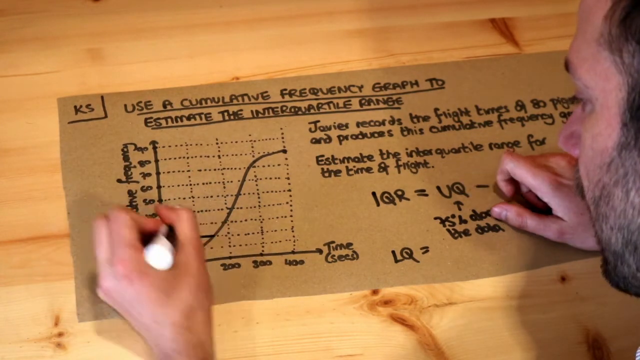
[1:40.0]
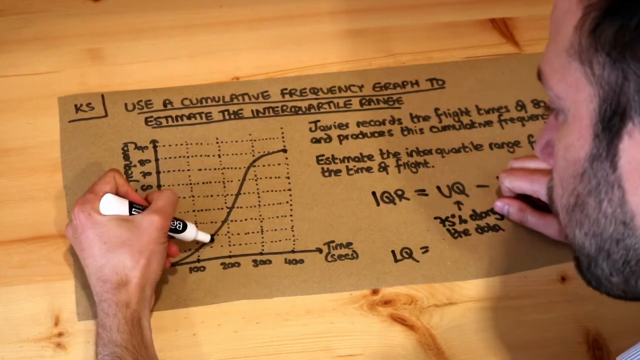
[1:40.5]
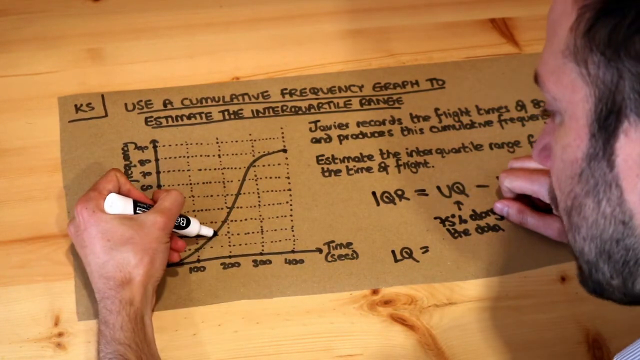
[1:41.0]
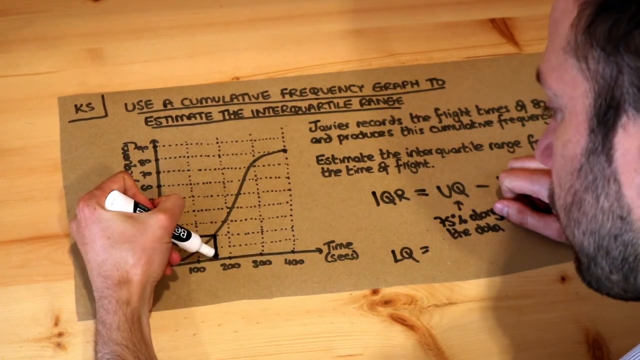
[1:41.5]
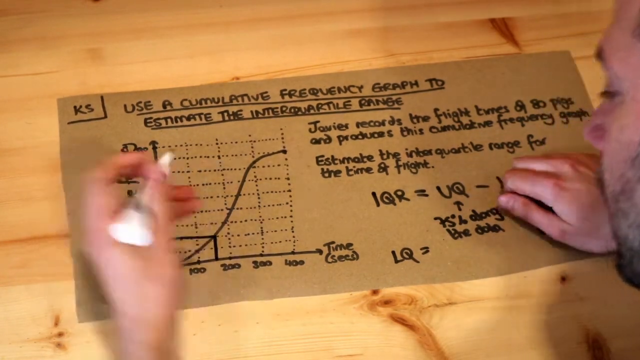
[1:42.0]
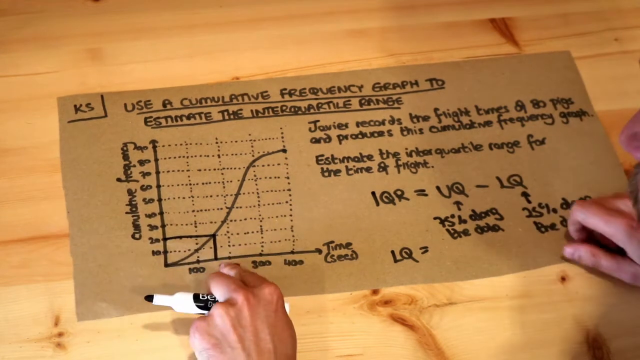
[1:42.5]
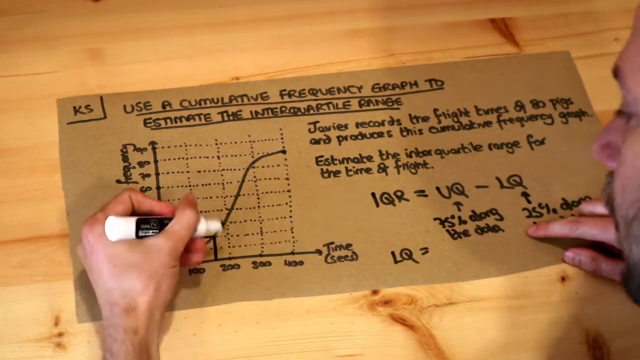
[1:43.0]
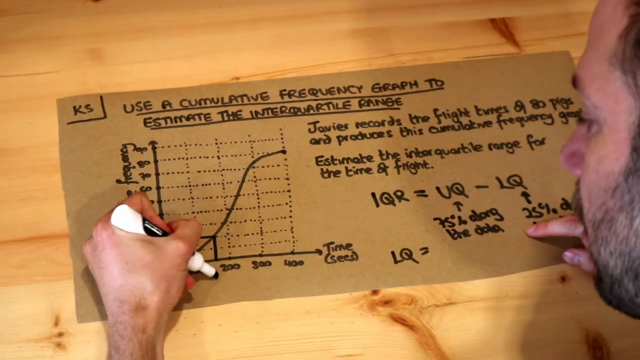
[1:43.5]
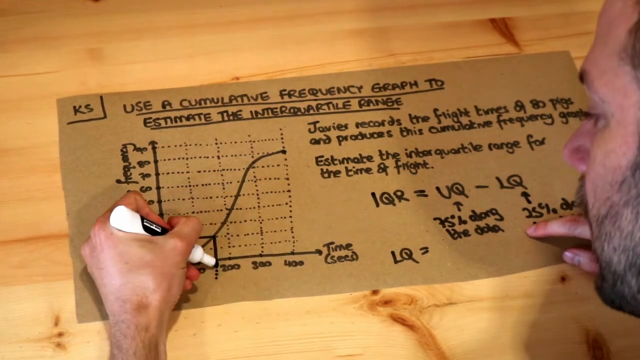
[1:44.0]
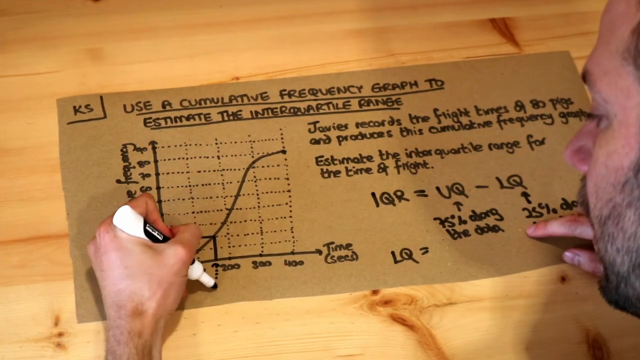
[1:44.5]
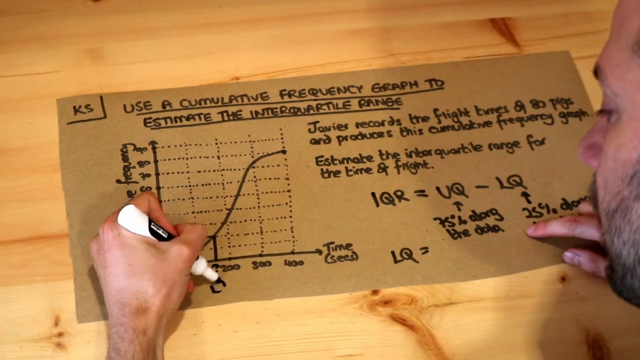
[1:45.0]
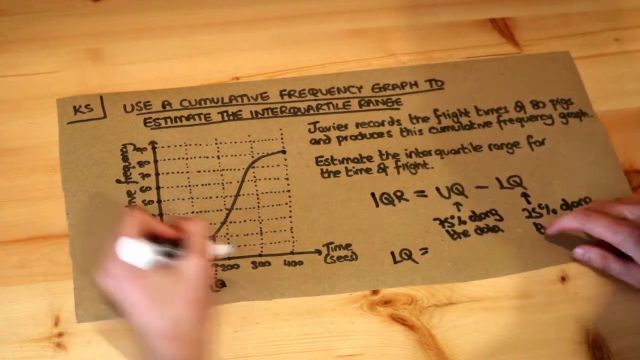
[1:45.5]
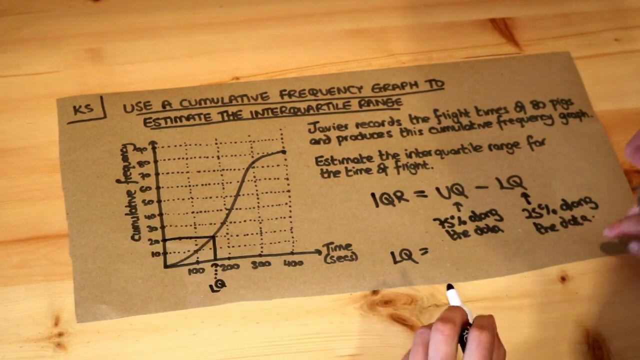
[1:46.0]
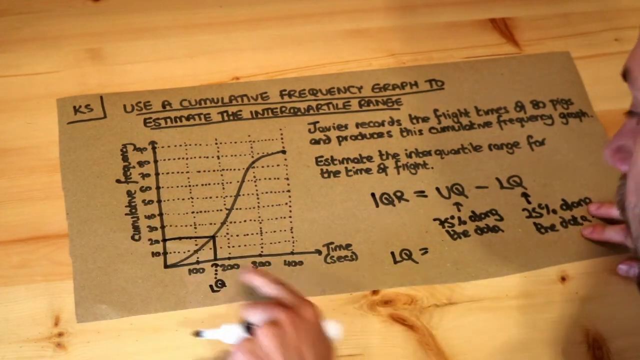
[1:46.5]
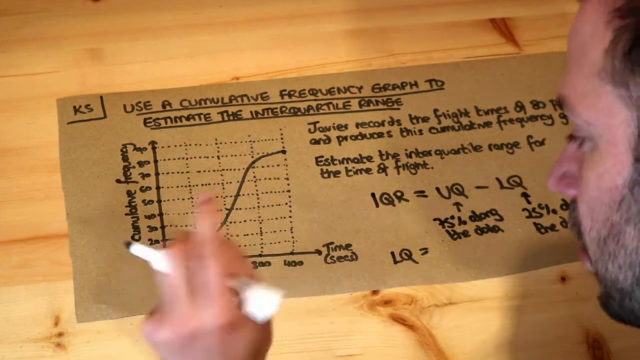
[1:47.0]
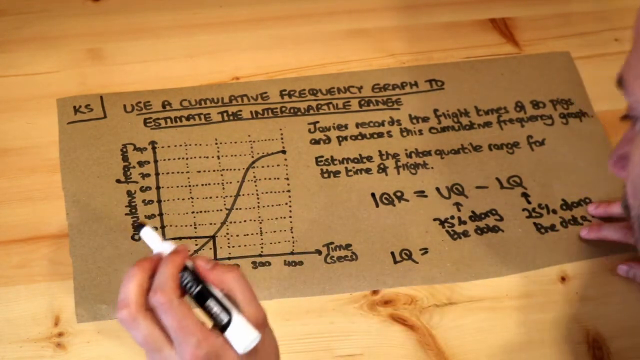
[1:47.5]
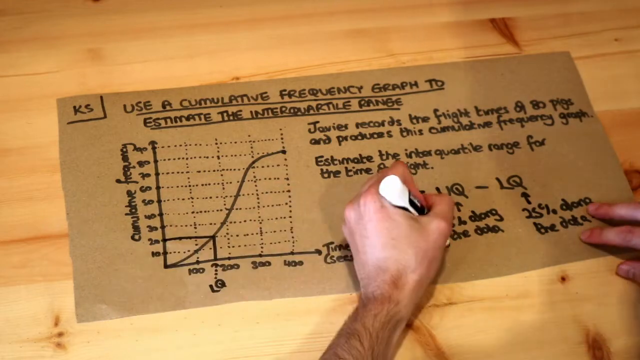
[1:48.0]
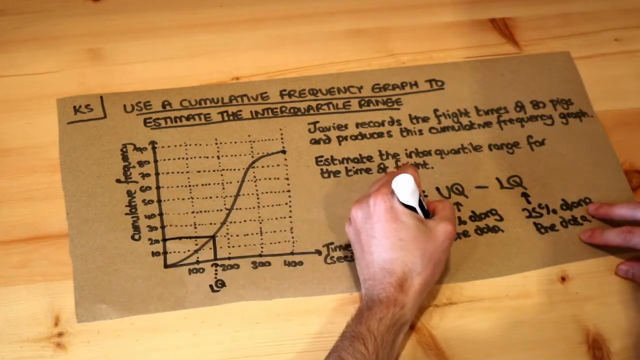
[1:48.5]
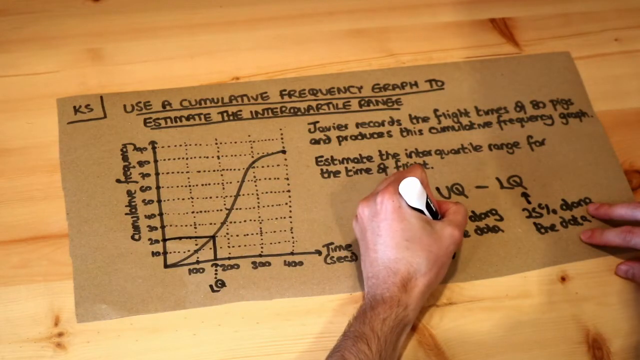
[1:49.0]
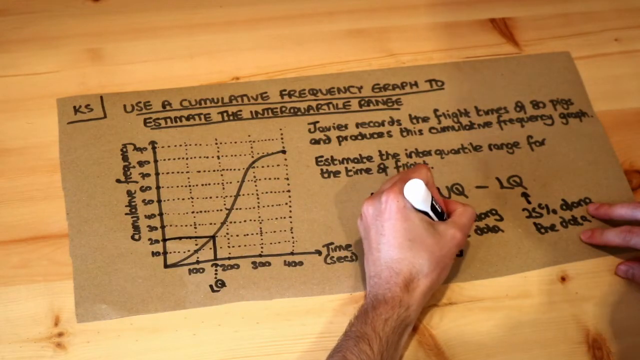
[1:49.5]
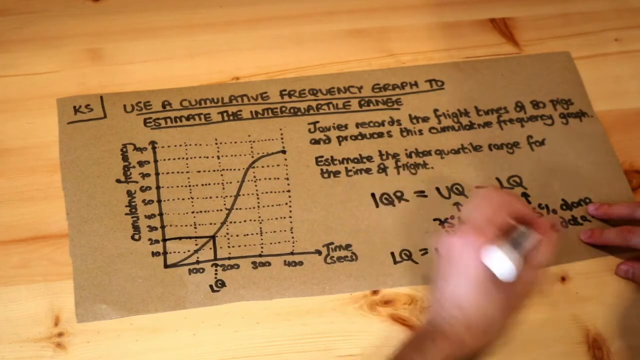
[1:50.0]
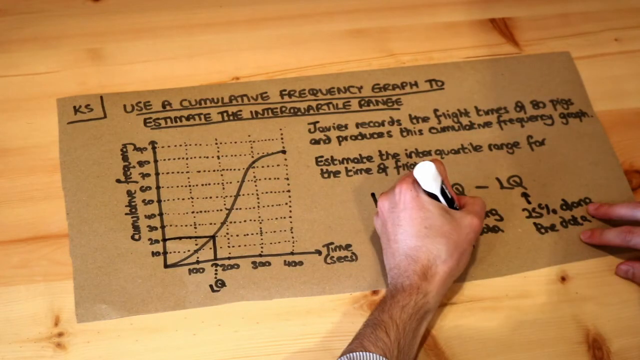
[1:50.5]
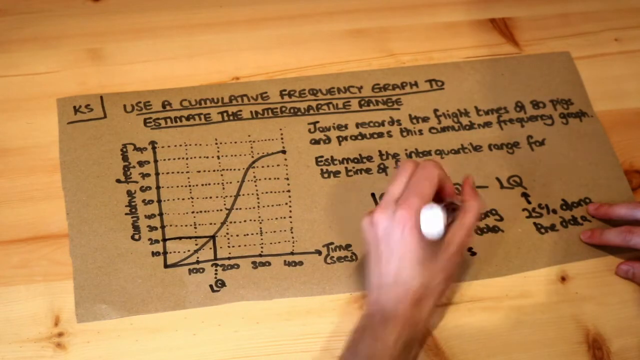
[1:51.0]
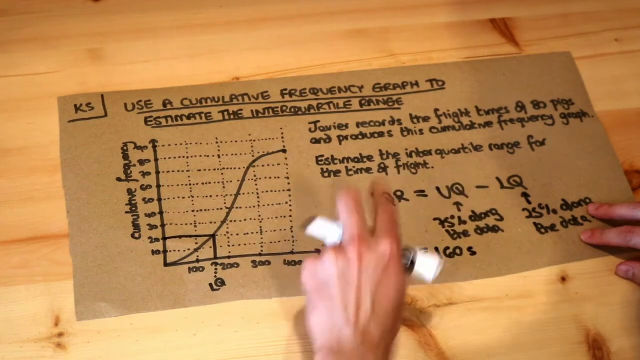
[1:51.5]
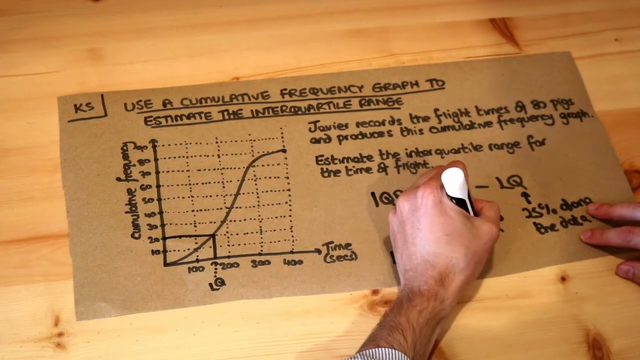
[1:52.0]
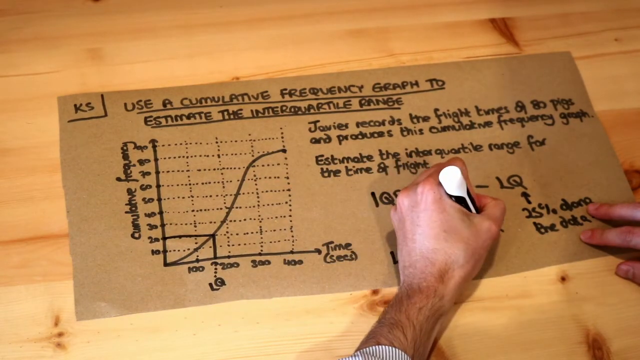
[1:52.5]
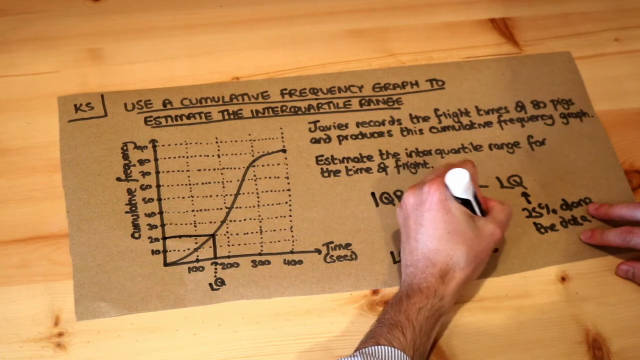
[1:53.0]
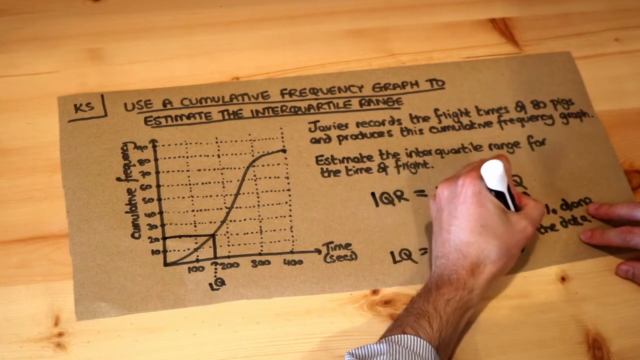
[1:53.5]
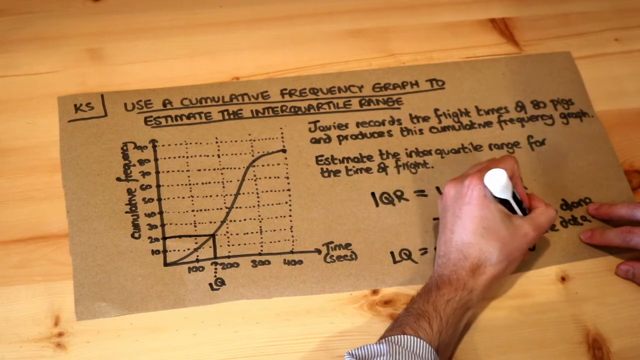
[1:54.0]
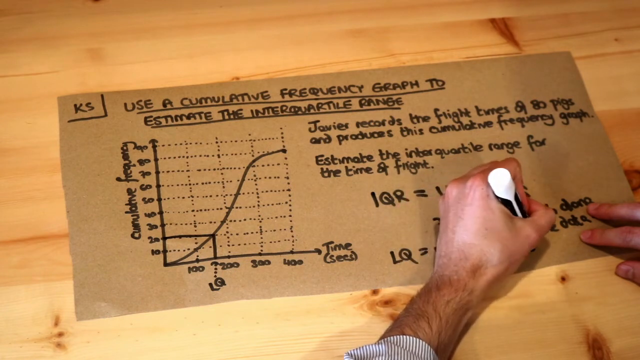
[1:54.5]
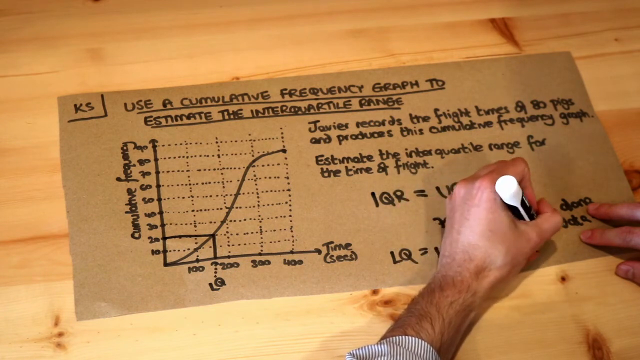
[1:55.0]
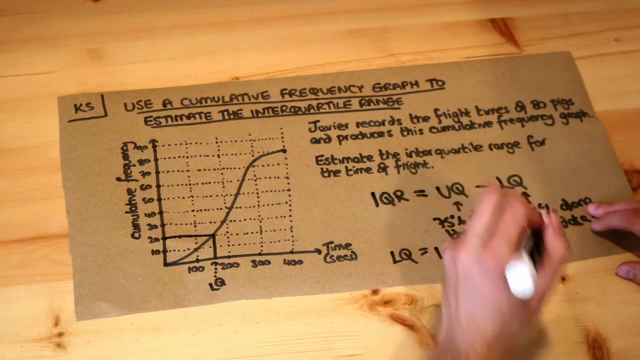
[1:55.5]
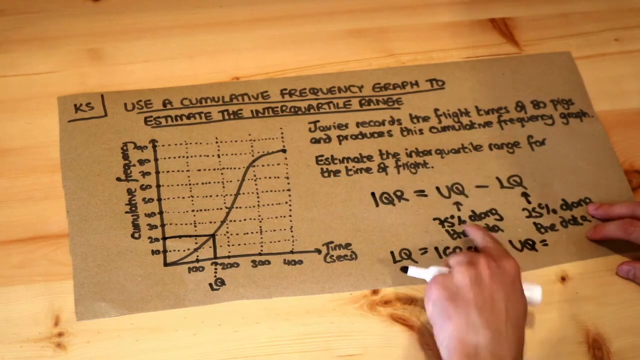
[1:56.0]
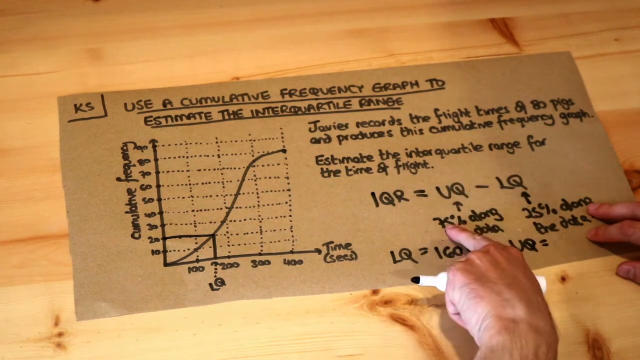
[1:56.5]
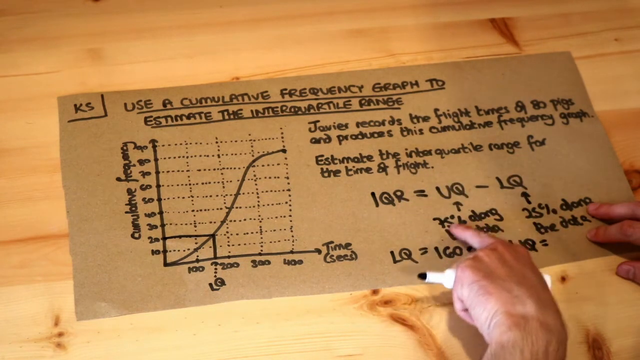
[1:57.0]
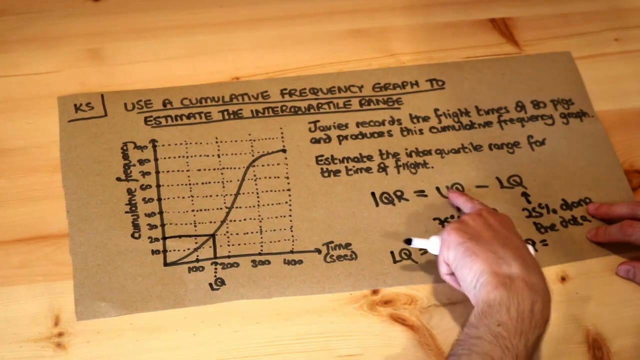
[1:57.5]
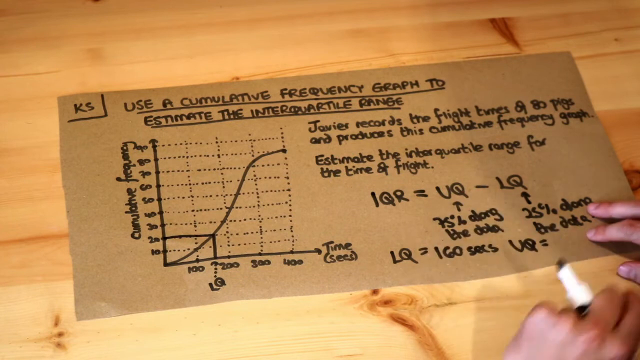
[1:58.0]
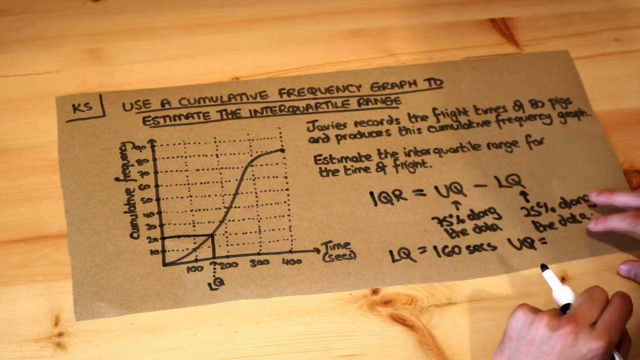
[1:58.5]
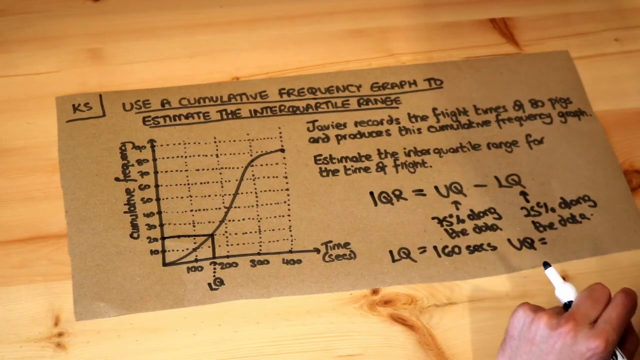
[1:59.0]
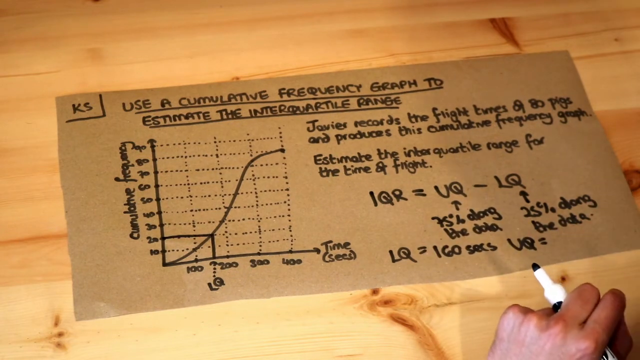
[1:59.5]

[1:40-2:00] A man is drawing a graph on a piece of cardboard titled "use a cumulative frequency graph to estimate the interquartile range." The graph has a curved line increasing from left to right, with time as the bottom measurement and cumulative frequency as the side measurement. He has written two sentences and an equation, and draws arrows to parts of the equation with small notations about the data: the middle one is "75 percent" and the last one is "25 percent." He writes "LQ equals" followed by 160 and something, possibly seconds, and then what appears to be "LP." He leans in, showing that he has a beard and black hair, and draws a box in the lowest corner of the graph. The cardboard has "KS" in the upper left-hand corner and a box, and it is on a light wooden table or surface.